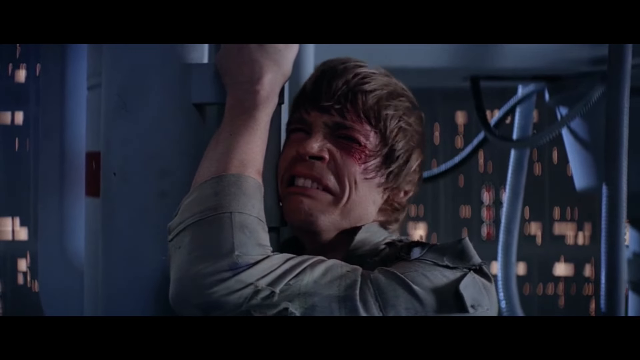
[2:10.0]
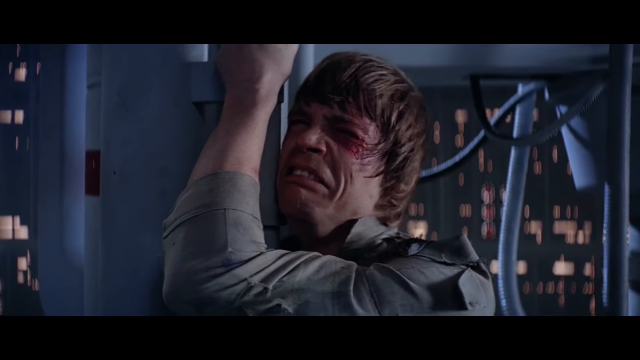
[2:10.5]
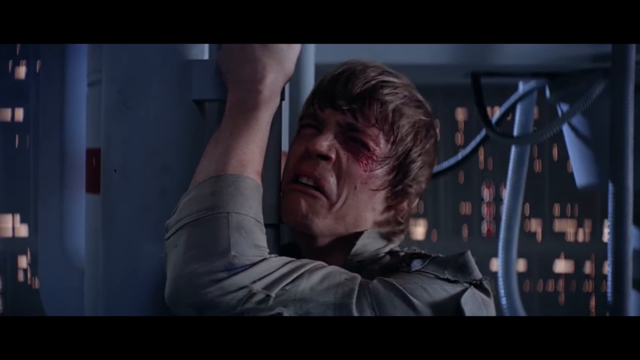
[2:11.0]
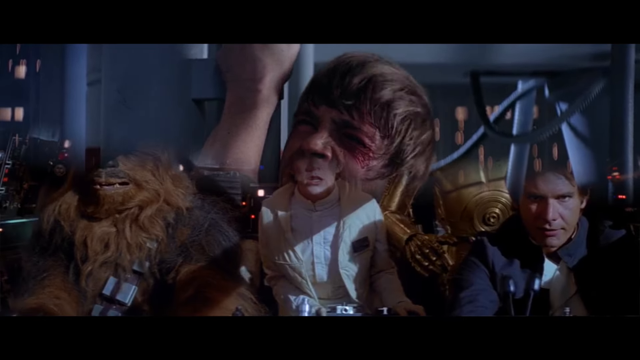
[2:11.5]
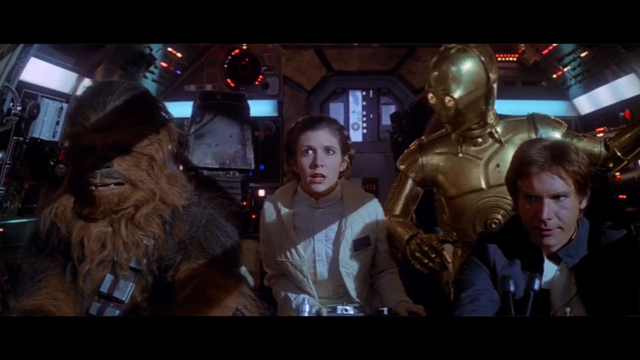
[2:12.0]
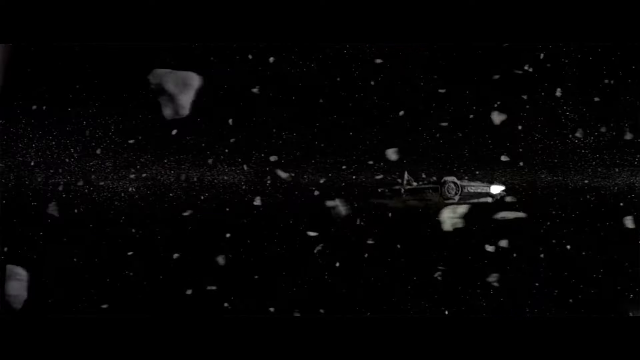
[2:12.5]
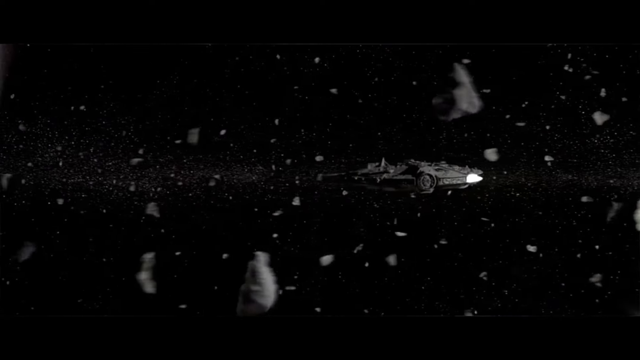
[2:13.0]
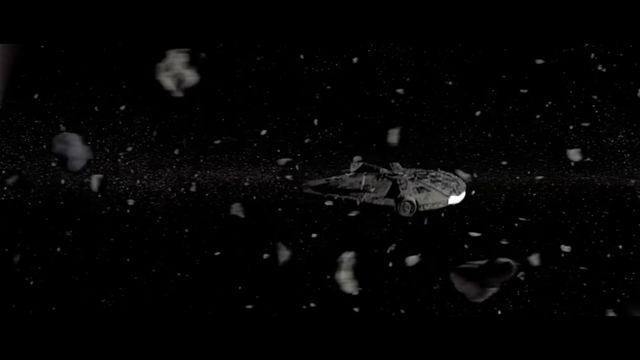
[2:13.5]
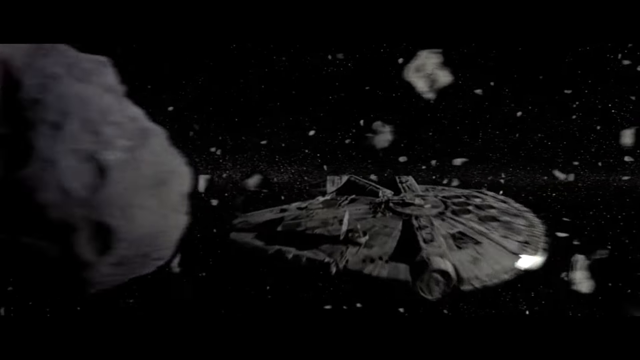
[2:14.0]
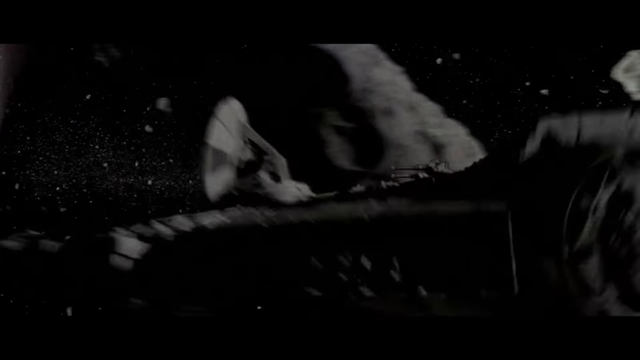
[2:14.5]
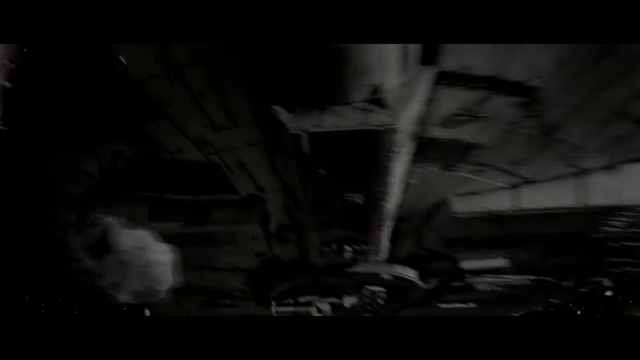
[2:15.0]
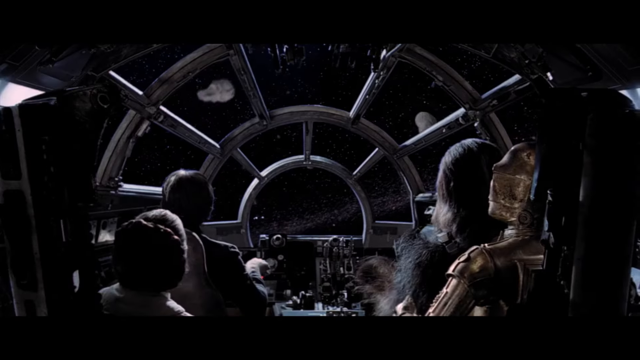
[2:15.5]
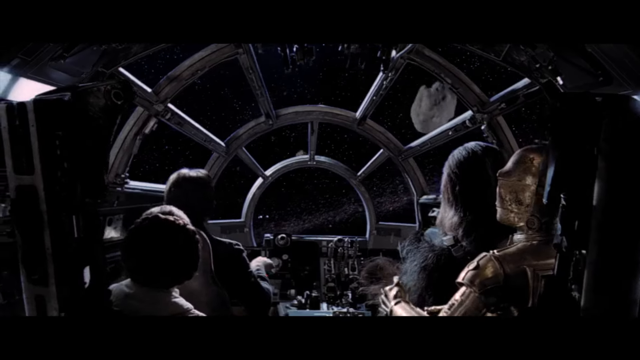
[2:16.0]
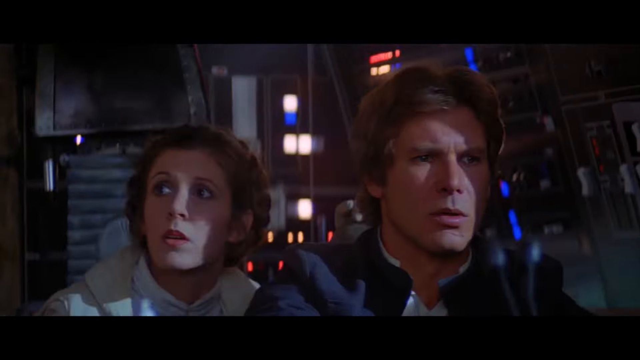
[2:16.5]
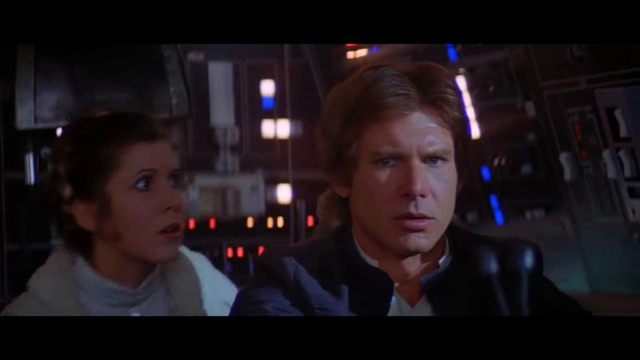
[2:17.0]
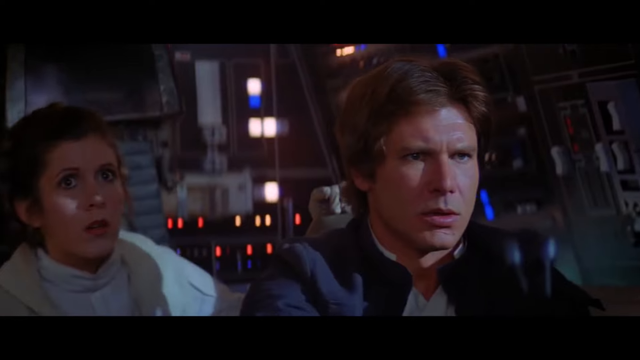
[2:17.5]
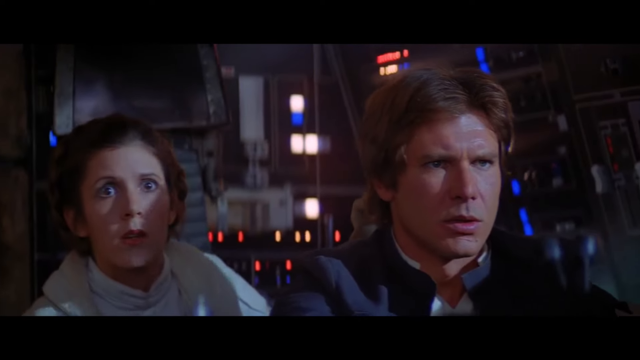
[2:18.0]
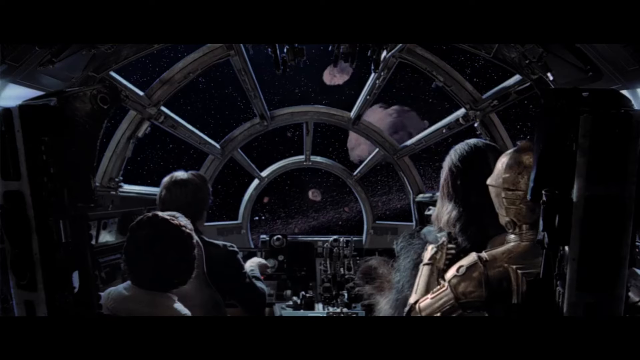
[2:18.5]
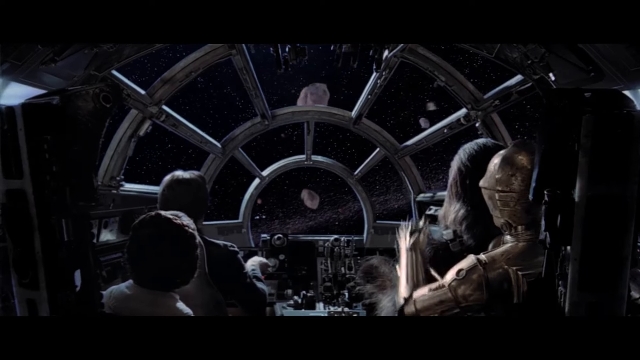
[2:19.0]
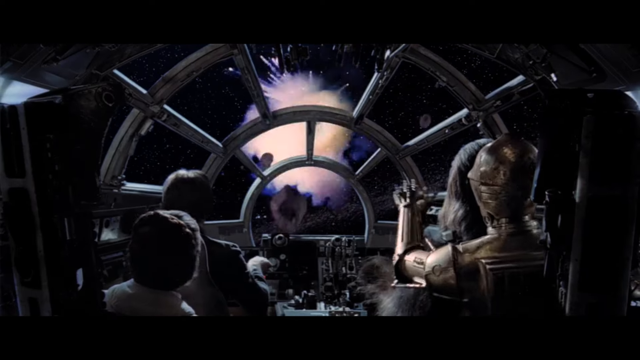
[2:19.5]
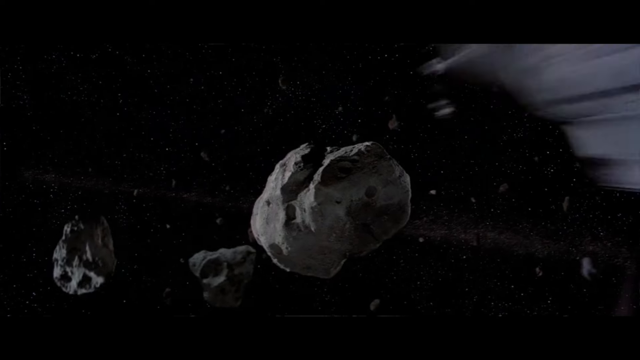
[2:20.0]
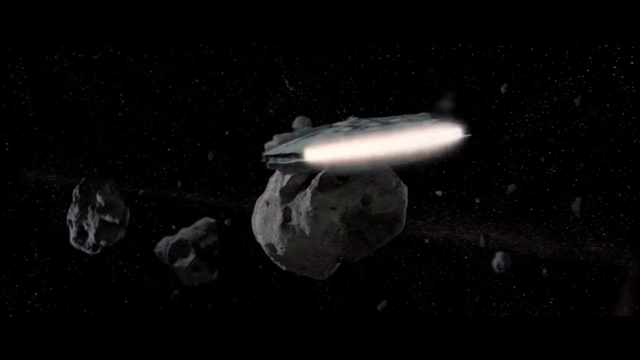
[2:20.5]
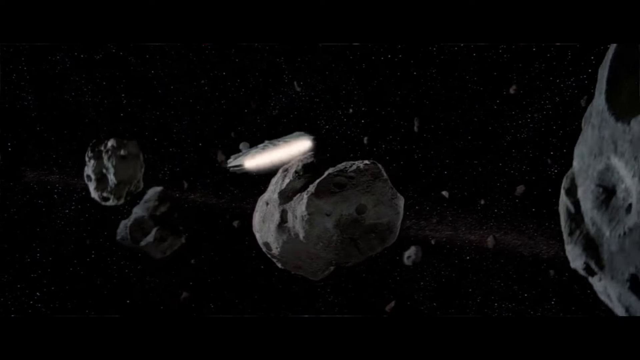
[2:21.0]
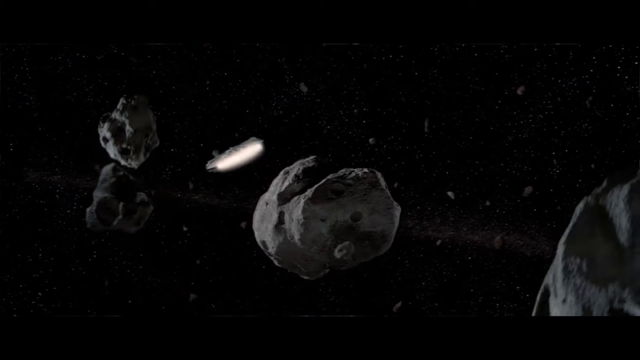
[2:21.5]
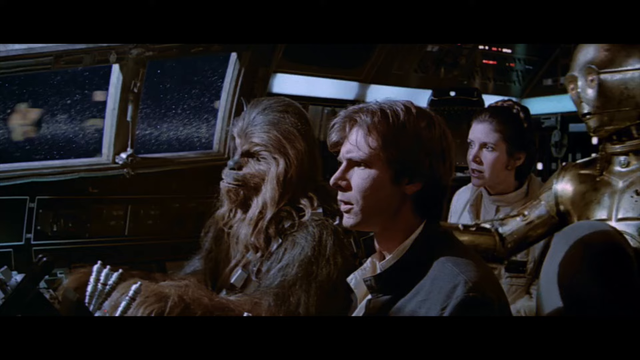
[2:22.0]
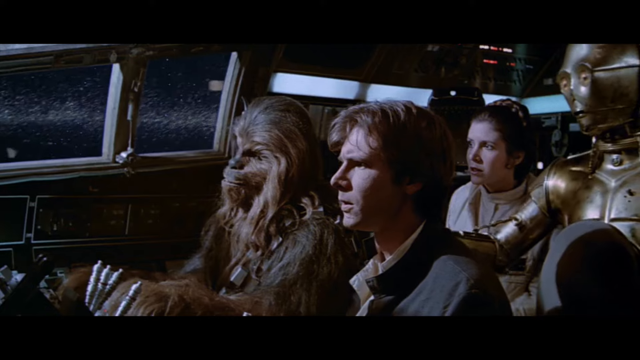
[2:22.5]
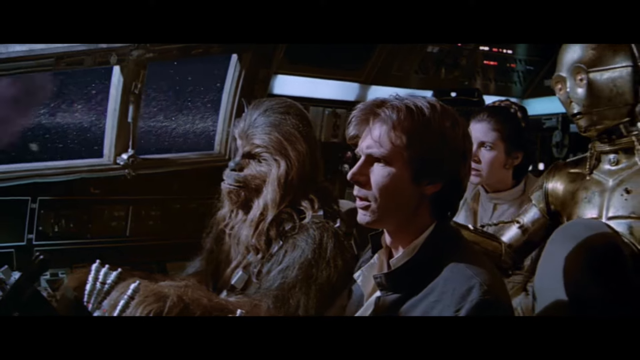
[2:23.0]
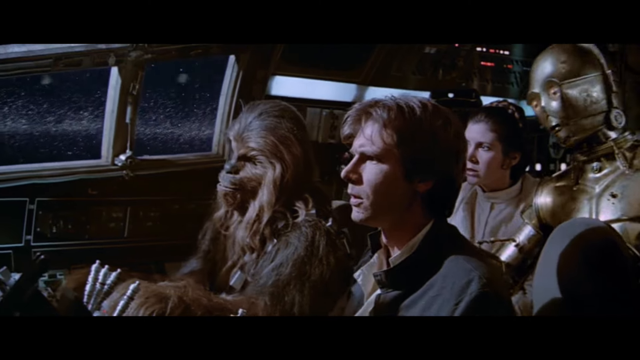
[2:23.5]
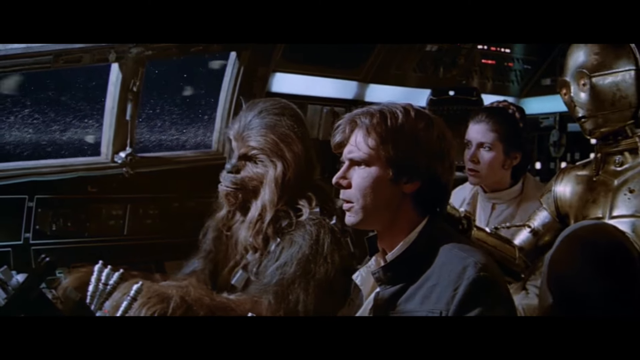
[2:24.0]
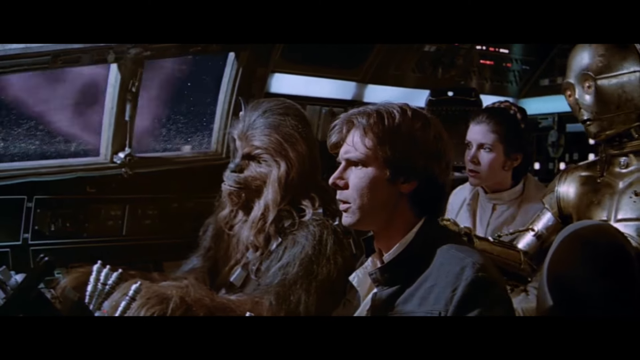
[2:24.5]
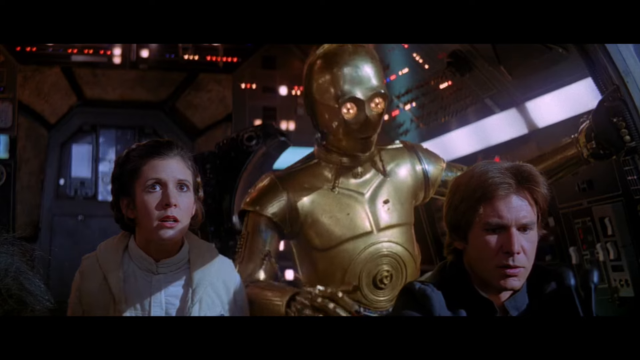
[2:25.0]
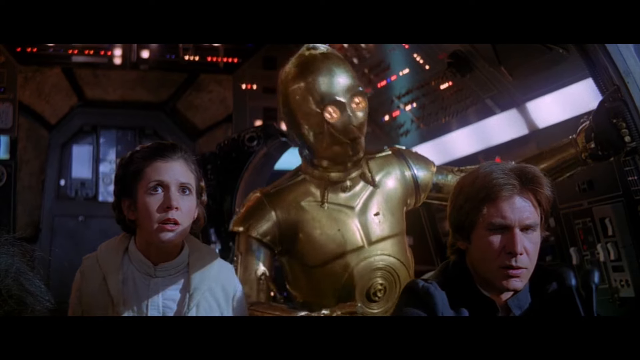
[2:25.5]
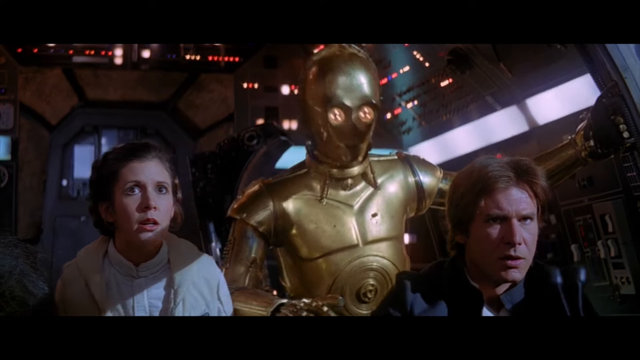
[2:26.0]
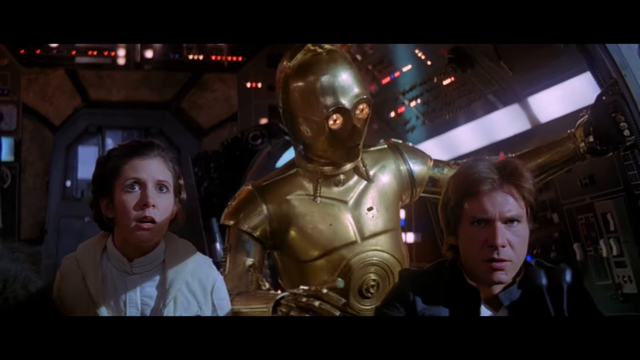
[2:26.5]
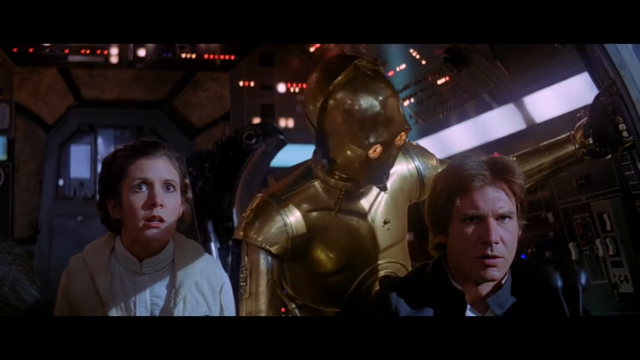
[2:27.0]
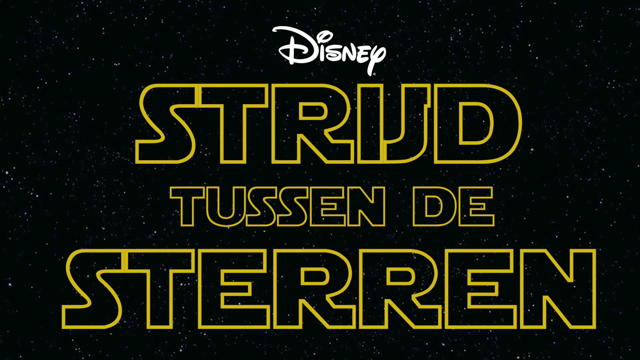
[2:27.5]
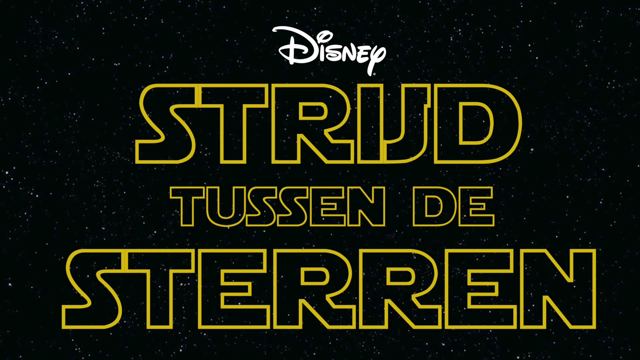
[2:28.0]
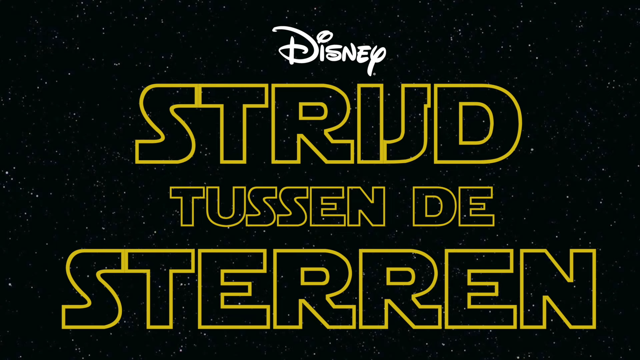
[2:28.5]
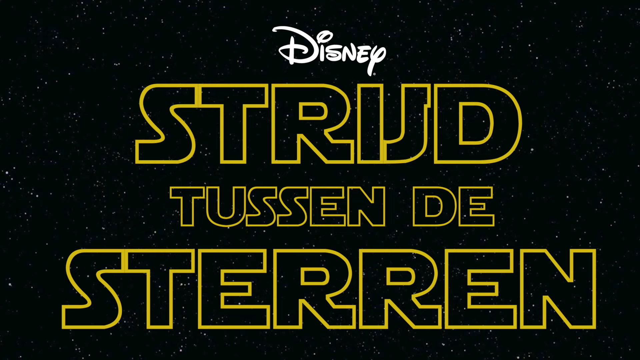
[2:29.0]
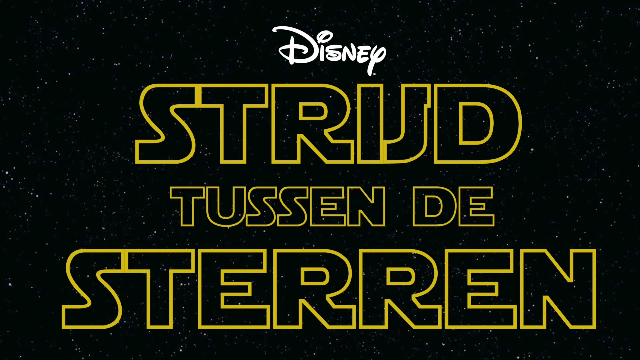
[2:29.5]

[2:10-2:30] The cutout scenes continue, with the same characters recurring. A spaceship tries to avoid asteroids while heading somewhere, and it is hit by some of them as it does its best to evade them. The Star Wars title appears again, written in a different language. Different fight scenes and emotional scenes follow with various characters, apparently including a Jedi. Characters fight with sabers on a platform, and a man and a woman converse in different scenes.